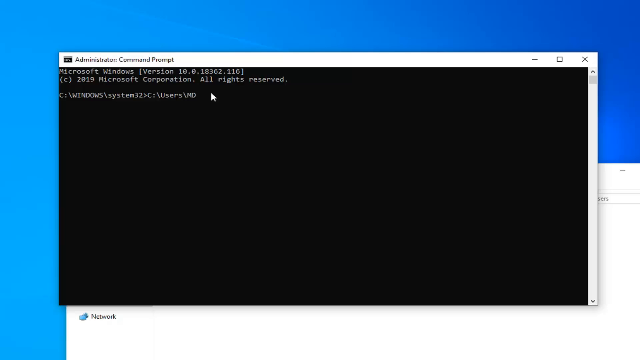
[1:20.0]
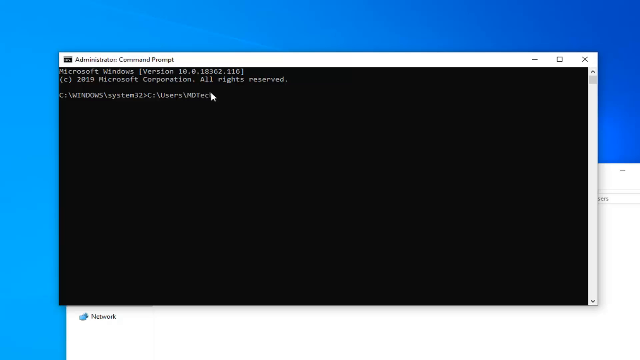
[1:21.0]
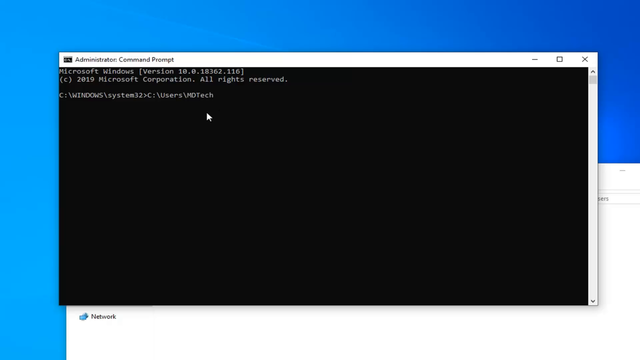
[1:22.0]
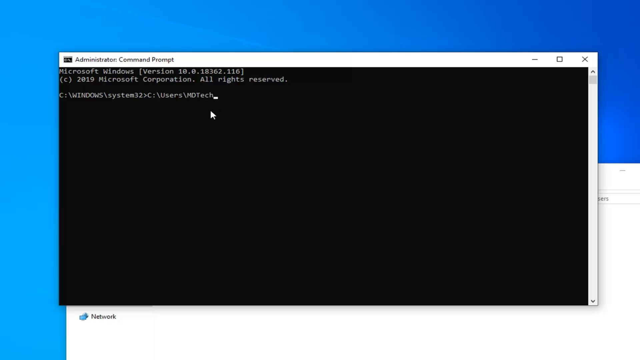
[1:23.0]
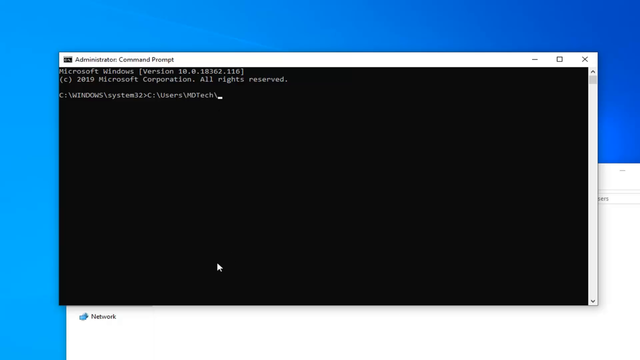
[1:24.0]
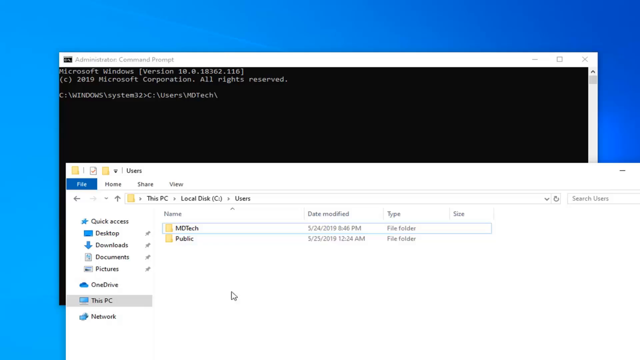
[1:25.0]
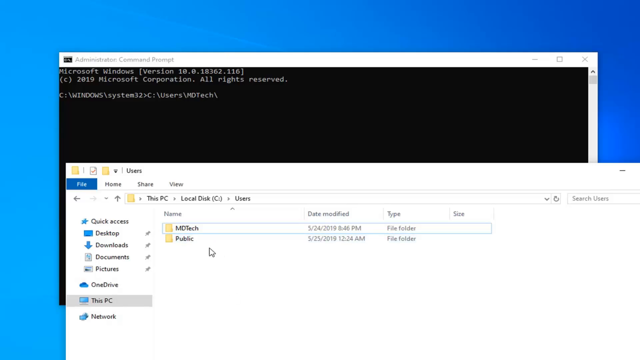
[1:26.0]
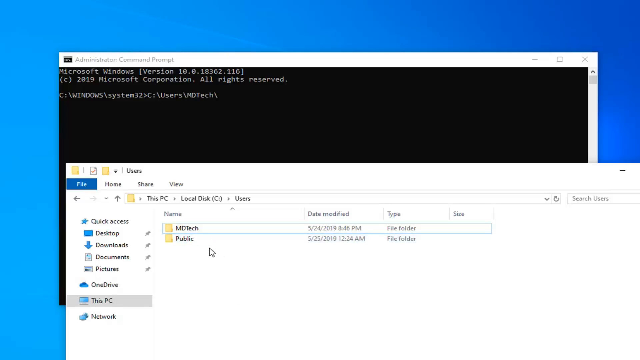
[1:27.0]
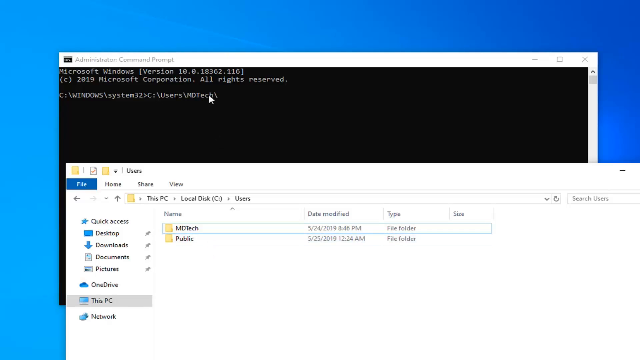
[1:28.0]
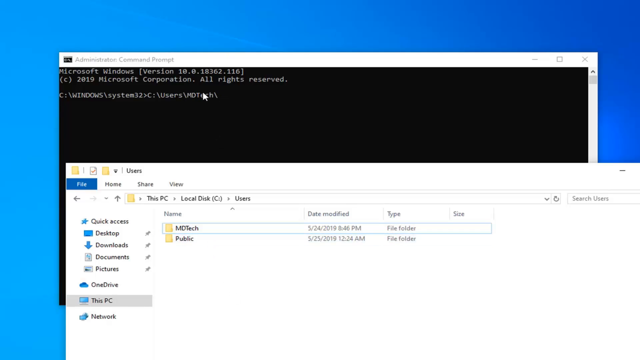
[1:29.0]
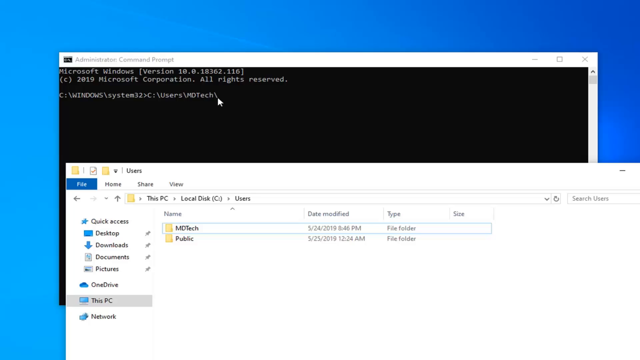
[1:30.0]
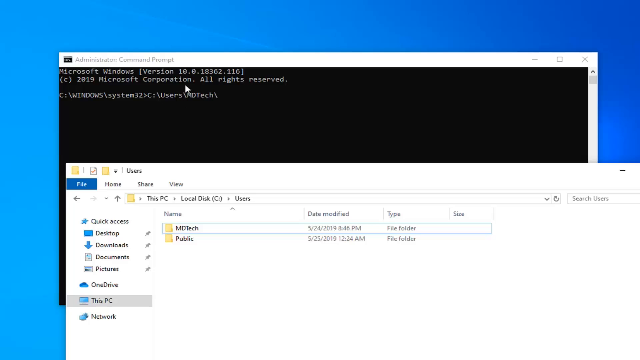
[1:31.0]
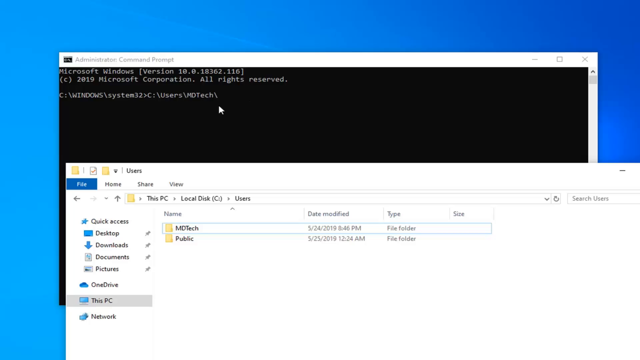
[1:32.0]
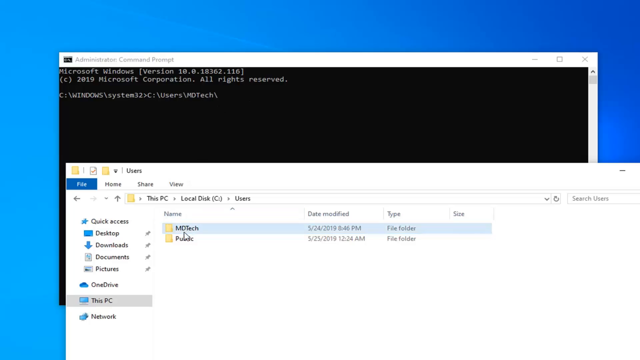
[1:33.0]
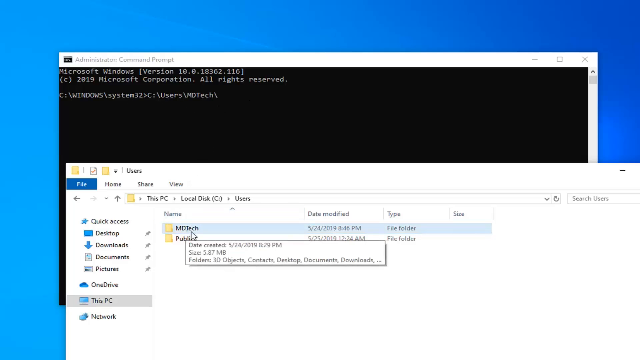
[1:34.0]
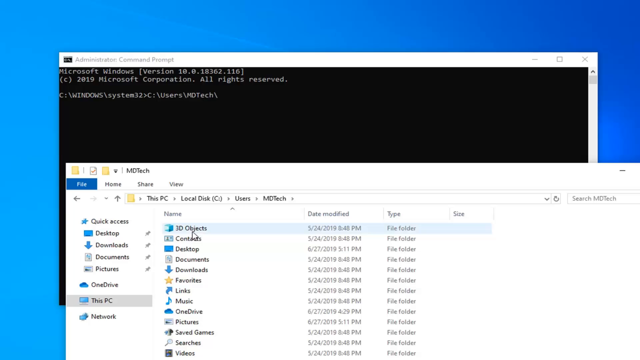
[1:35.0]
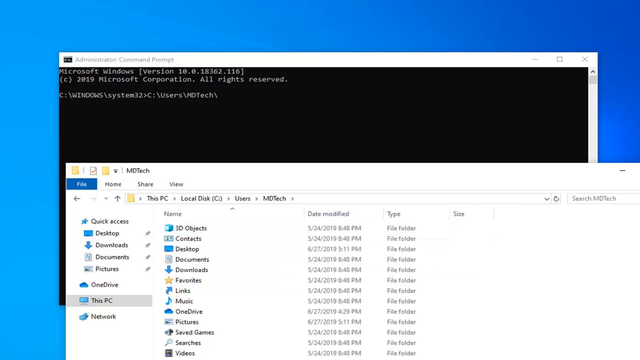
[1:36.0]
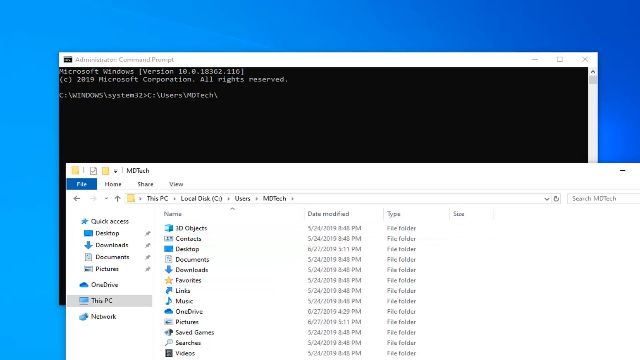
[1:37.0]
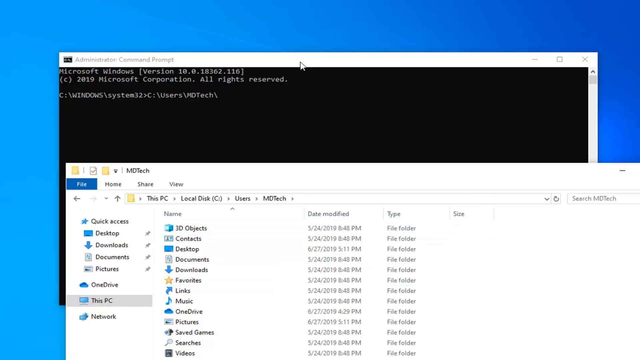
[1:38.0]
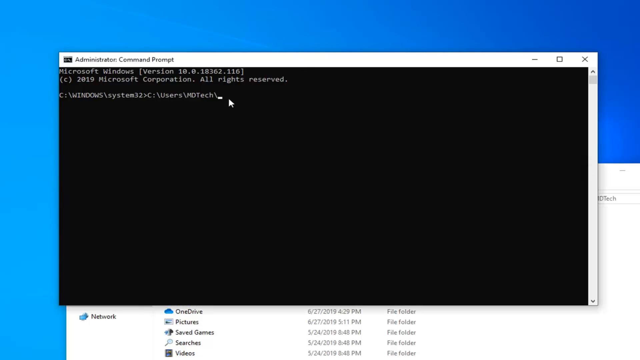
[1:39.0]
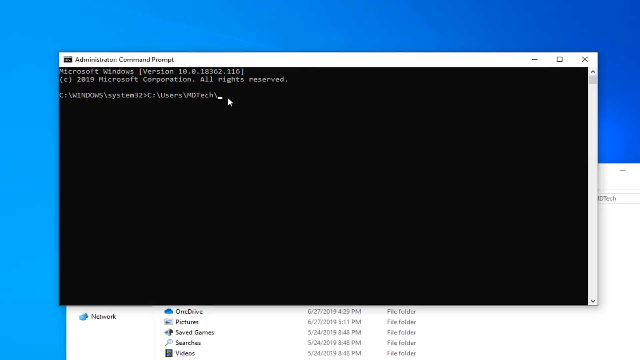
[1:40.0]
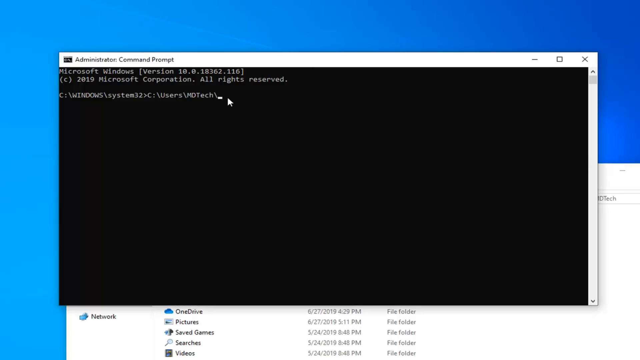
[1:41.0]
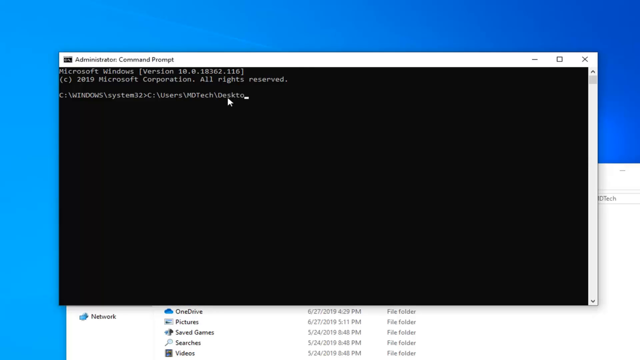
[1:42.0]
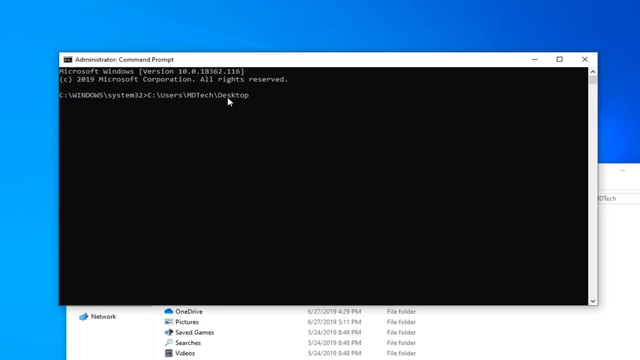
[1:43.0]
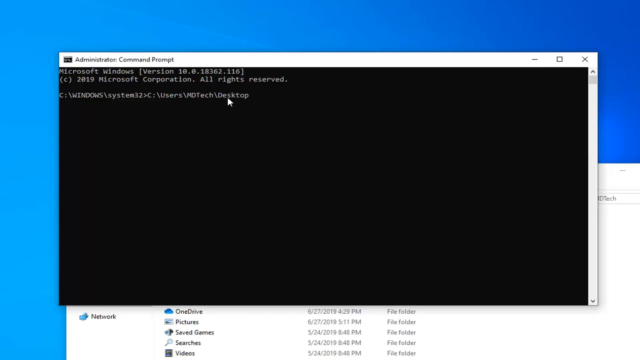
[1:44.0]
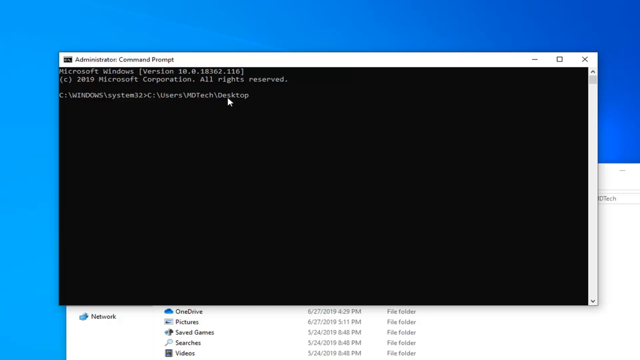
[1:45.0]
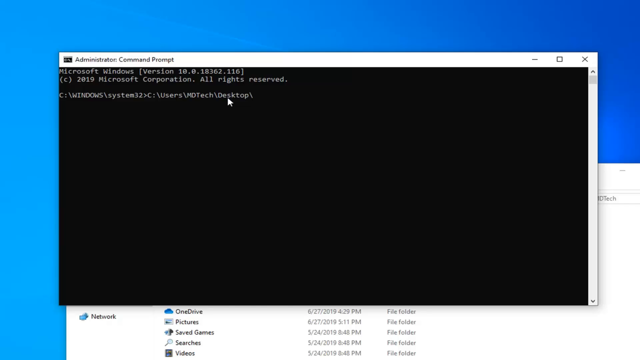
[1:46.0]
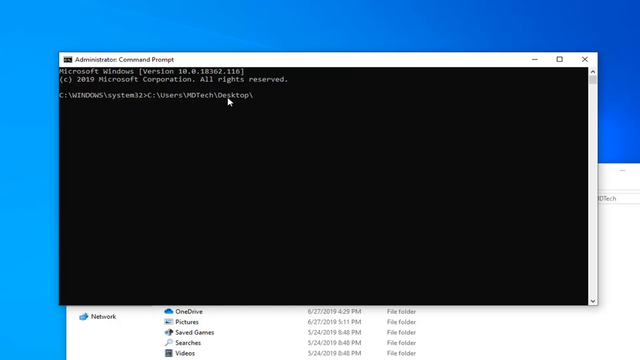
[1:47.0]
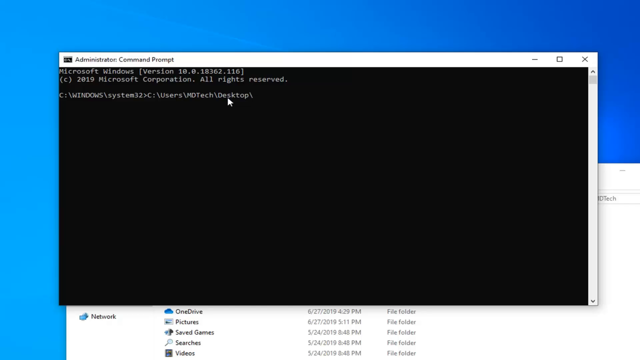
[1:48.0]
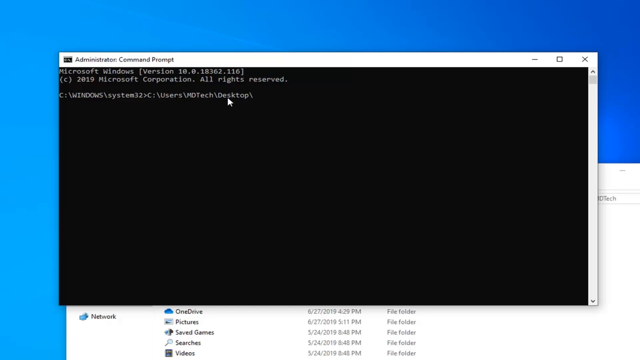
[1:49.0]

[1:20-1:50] The administrative command prompt is open and reads "Microsoft Windows (version 10.0)" followed by "2019 Microsoft Corporation, all rights reserved". Below are the lines "C:\Windows\system 32" and "C:\users\MD". An MDTEC folder then opens at the bottom, showing a date modified of 5-24-19. He shows MD Tech at the top, highlights it, and goes all the way down to Pictures.